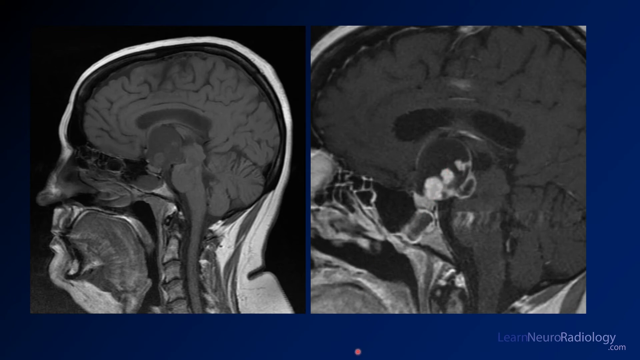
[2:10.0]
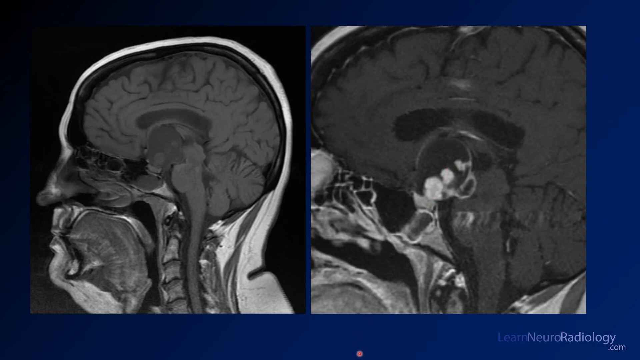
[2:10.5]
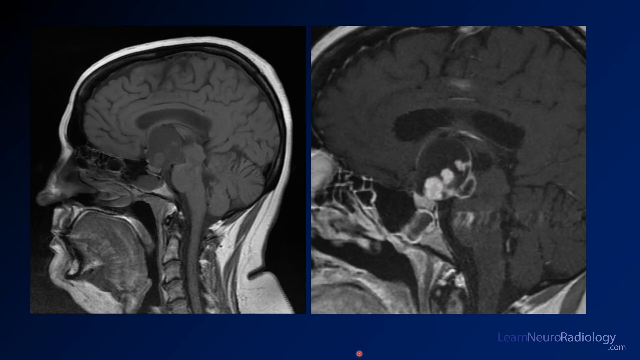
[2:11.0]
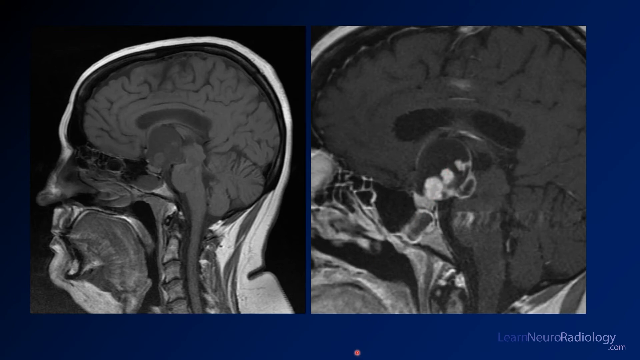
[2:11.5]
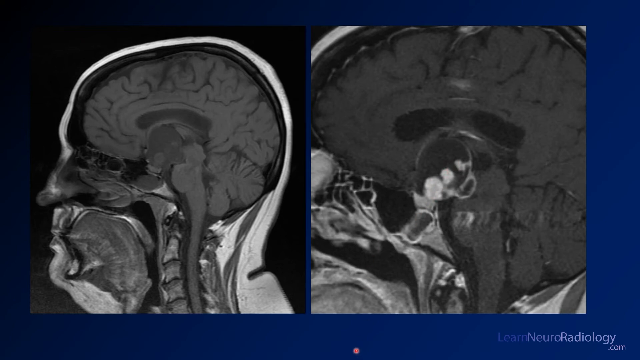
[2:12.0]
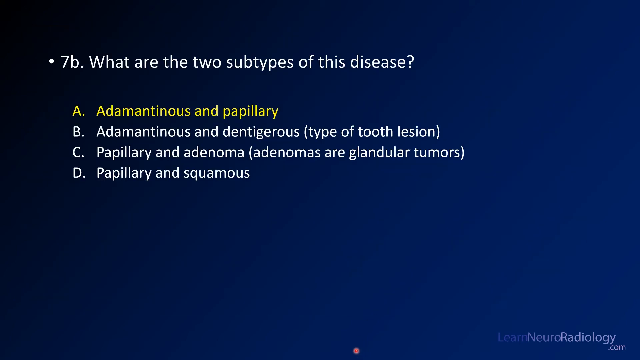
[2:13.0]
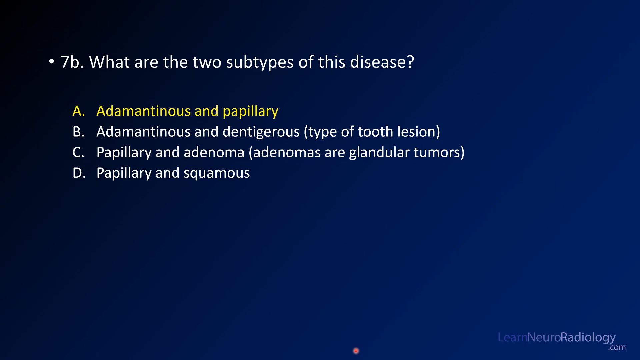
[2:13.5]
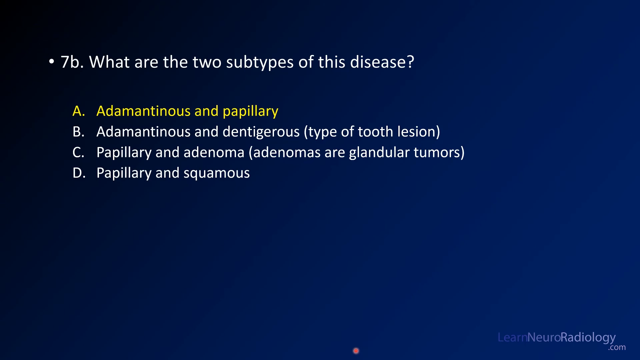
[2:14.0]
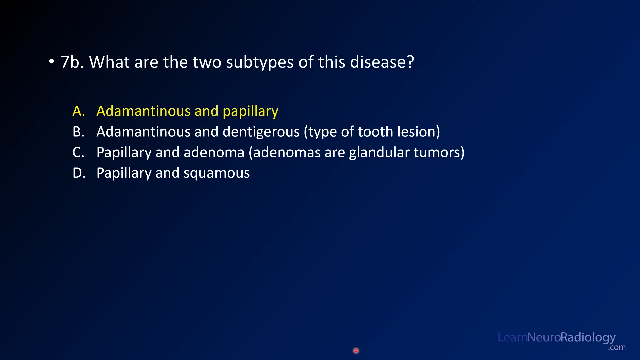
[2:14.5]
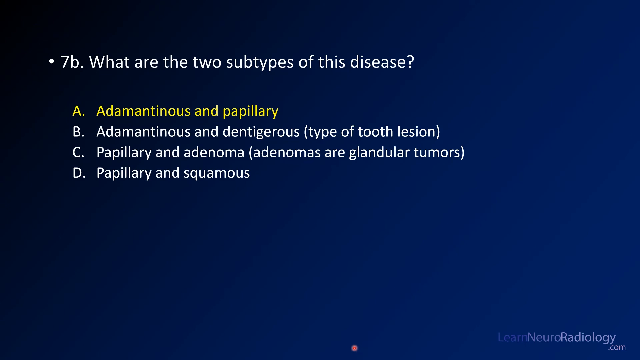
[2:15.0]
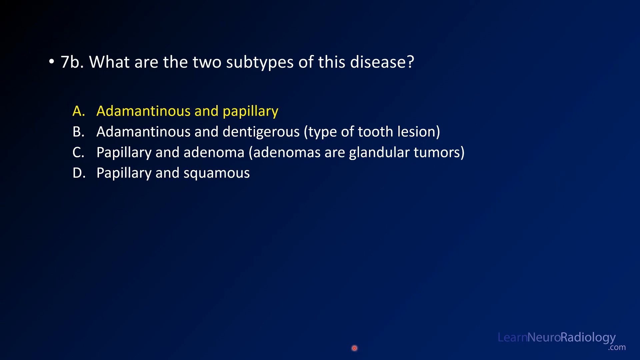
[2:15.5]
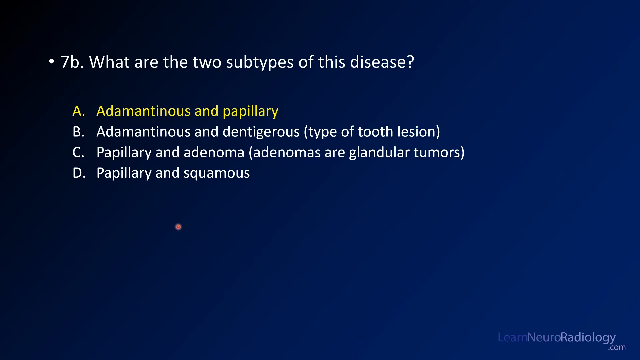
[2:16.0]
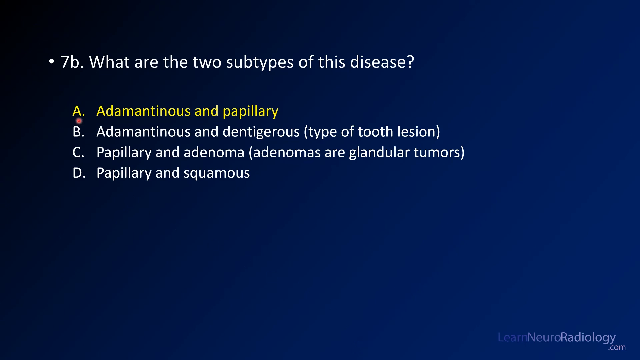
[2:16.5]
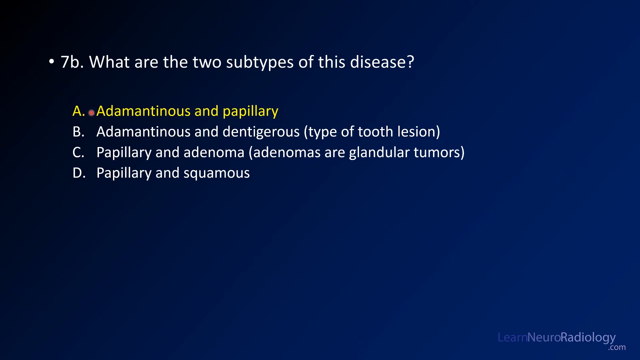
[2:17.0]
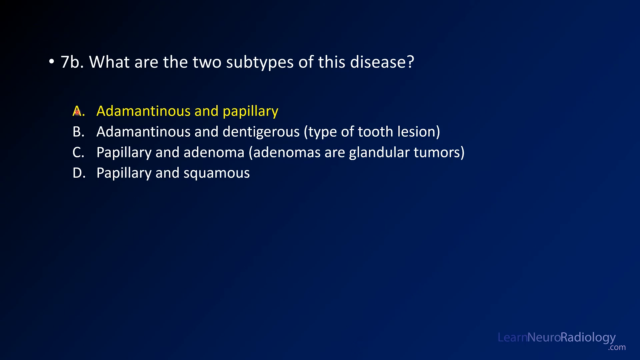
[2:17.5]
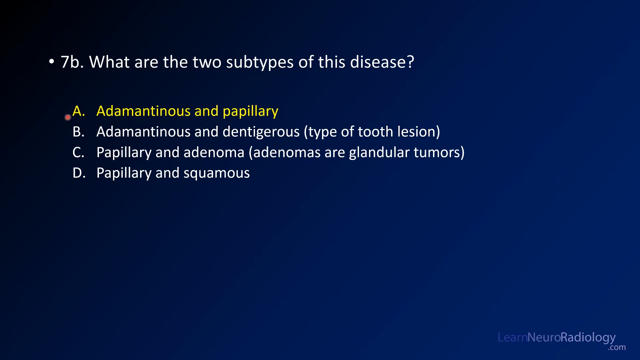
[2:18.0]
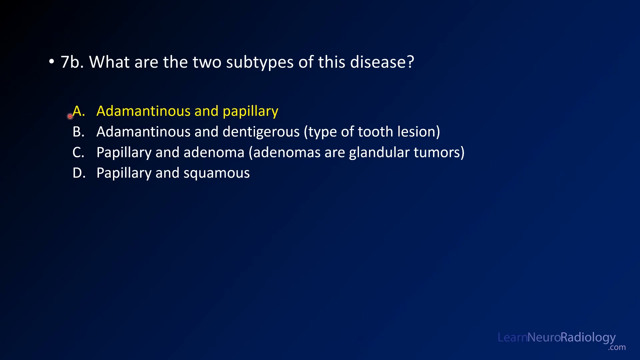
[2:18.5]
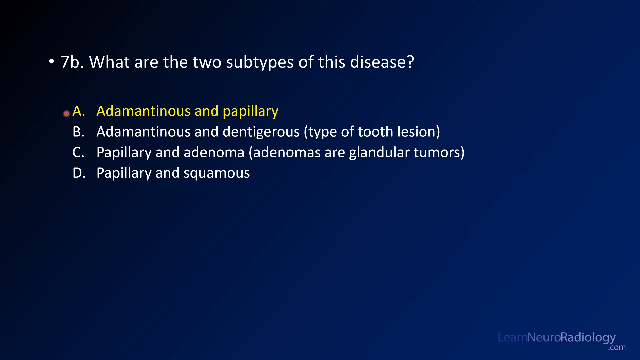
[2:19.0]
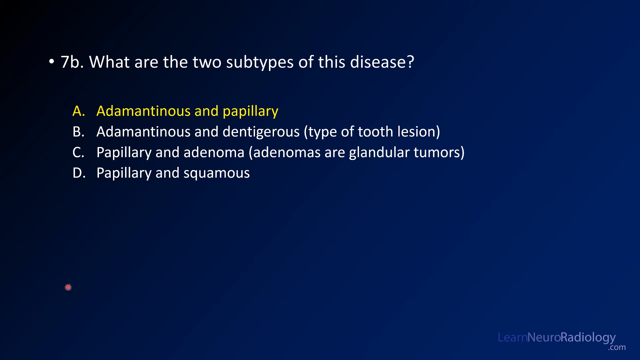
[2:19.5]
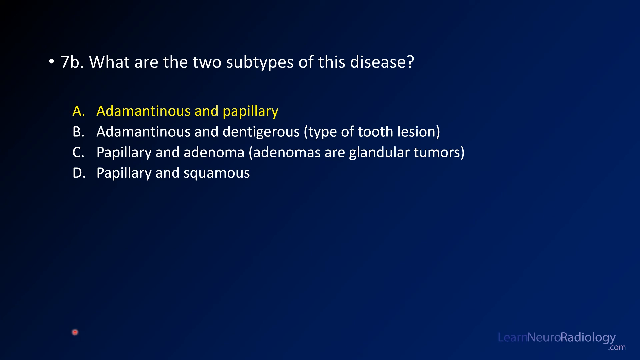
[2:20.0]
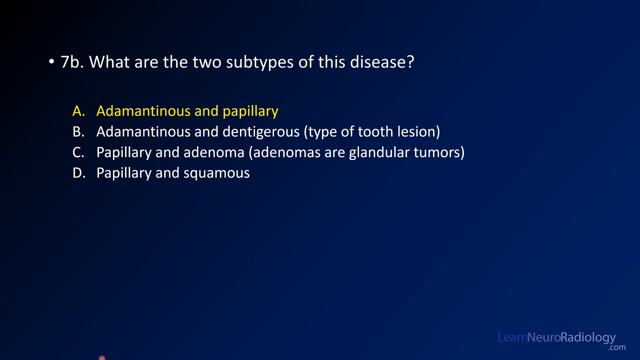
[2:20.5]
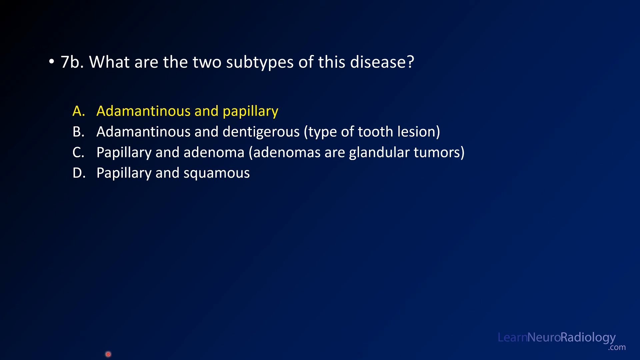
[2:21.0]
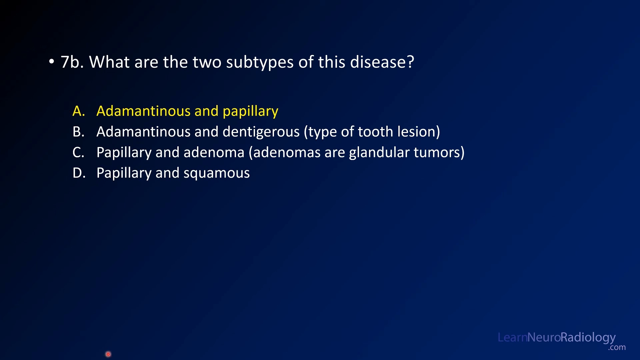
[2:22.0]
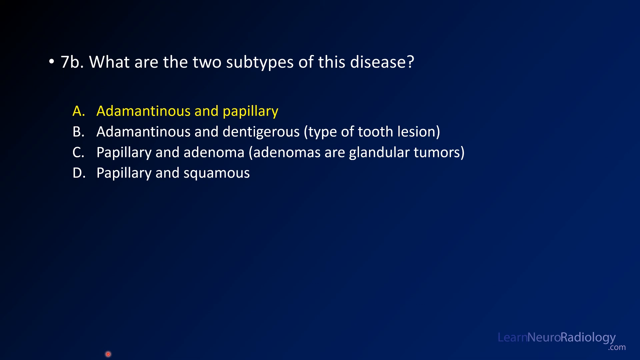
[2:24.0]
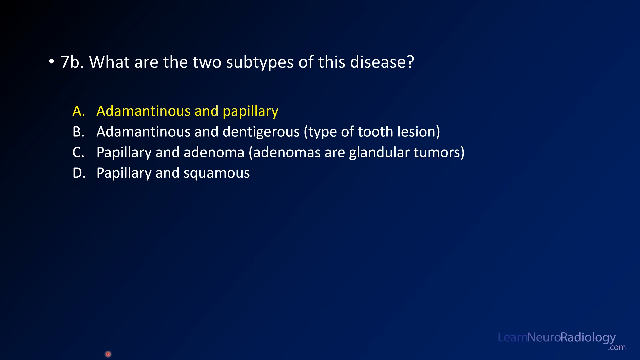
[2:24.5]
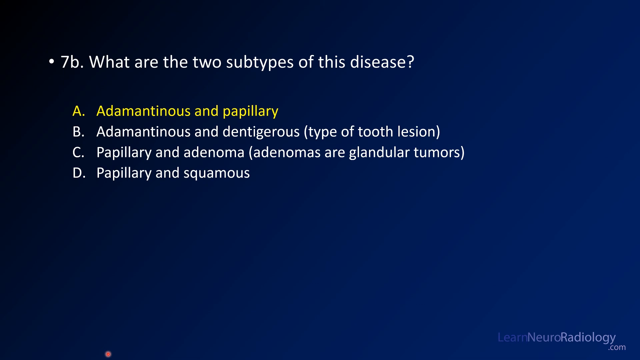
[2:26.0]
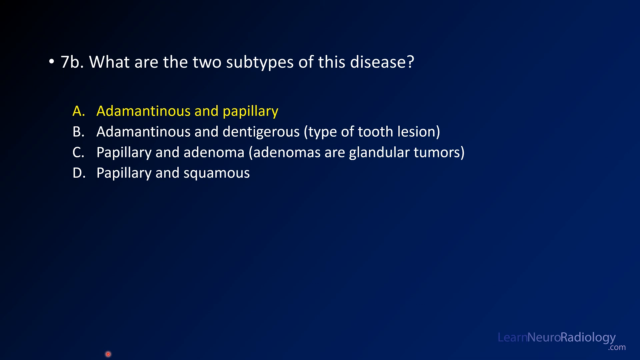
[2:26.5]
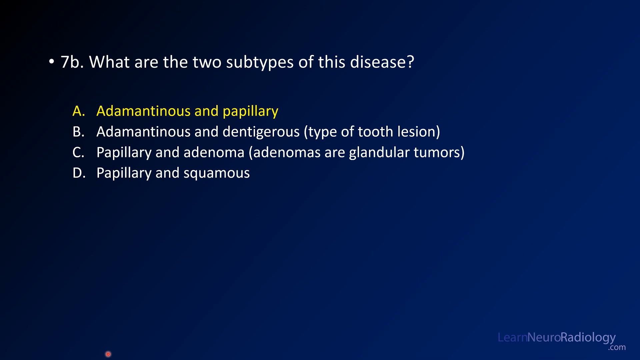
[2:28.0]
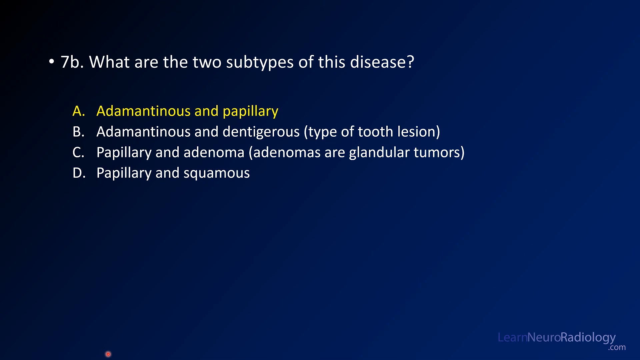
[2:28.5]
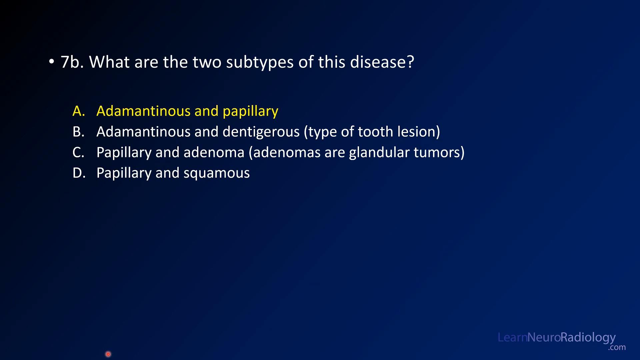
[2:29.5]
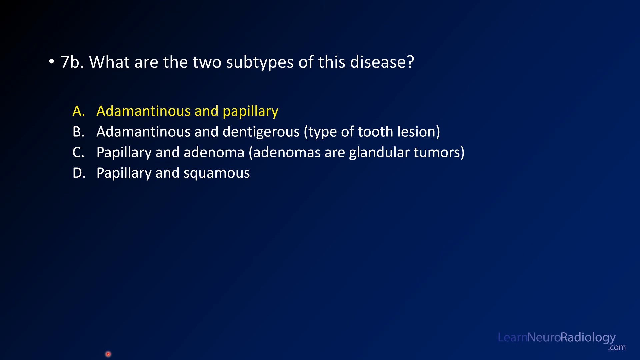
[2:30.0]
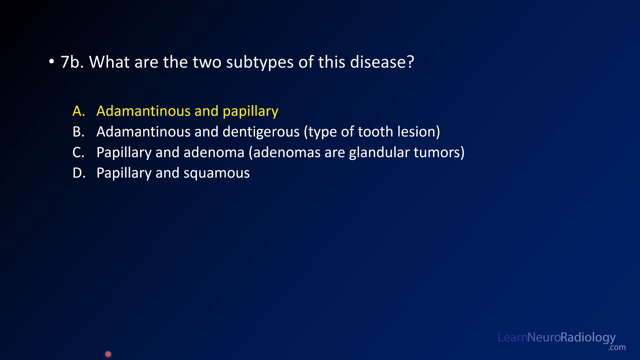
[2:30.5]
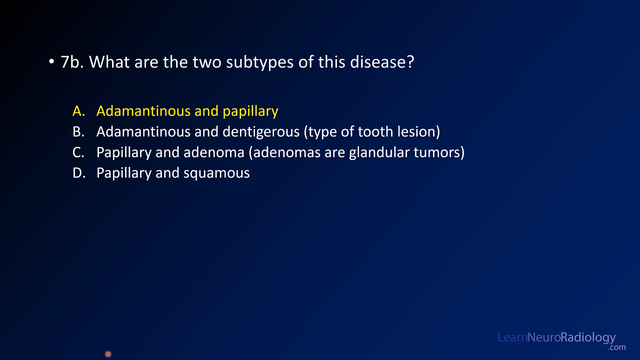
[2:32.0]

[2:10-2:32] The two side-by-side side-on views of the brain appear, and then the video moves to a navy blue background with text reading "7b what are the two subtypes of this disease?" followed by the options "a adamantinous and papillary," "b adamantinous and dentiturous (type of tooth lesion)," "c papillary and adenoma (adenomas are glandular tumours)," and "d papillary and squamous." All of the options are in white except option a, adamantinous and papillary, which is in yellow, apparently marking it as the correct answer. No other images or scans are shown, and the blue background remains the whole time.